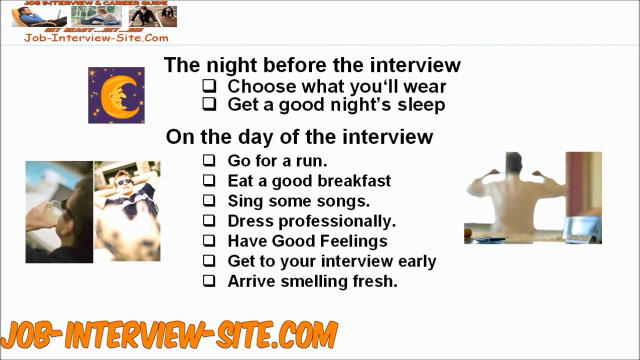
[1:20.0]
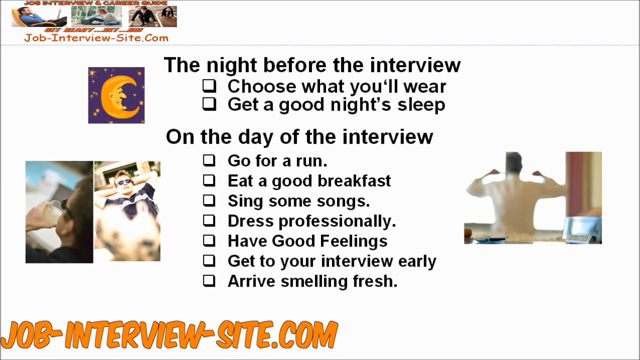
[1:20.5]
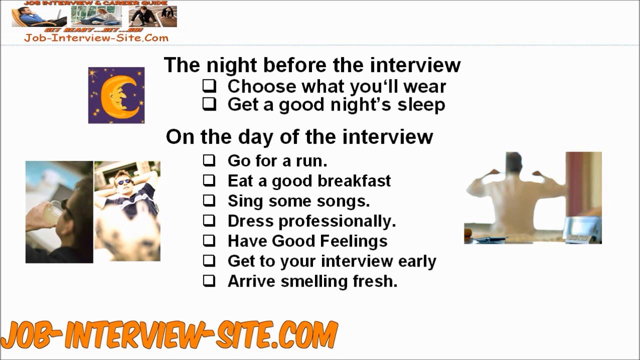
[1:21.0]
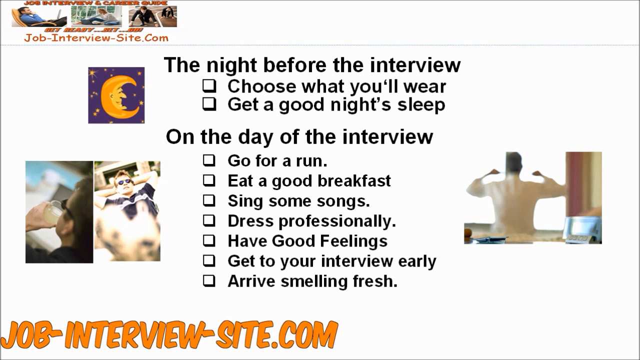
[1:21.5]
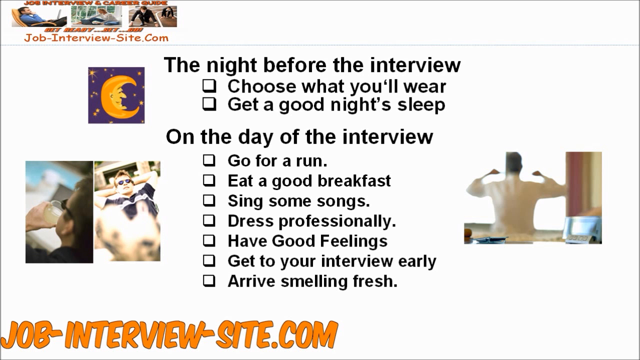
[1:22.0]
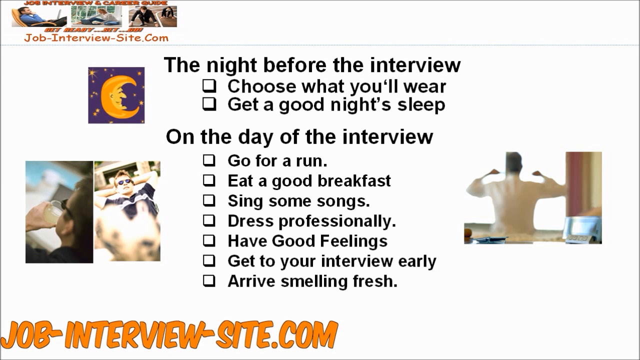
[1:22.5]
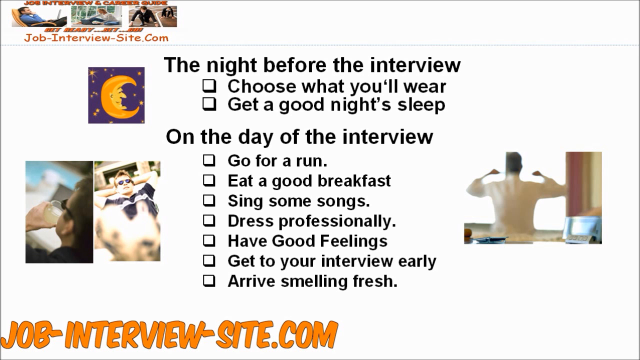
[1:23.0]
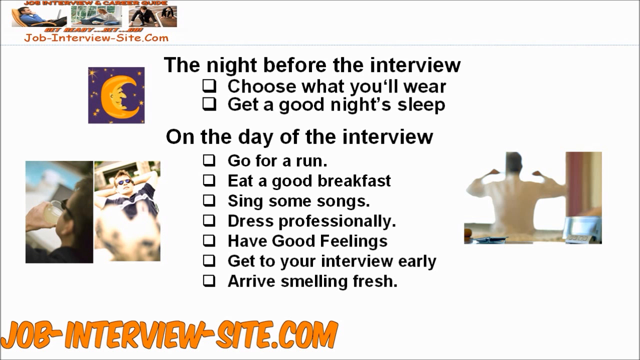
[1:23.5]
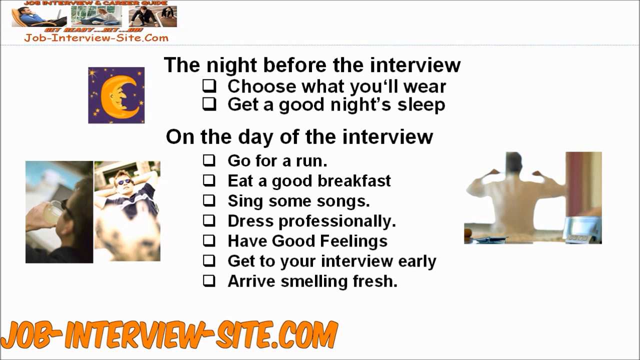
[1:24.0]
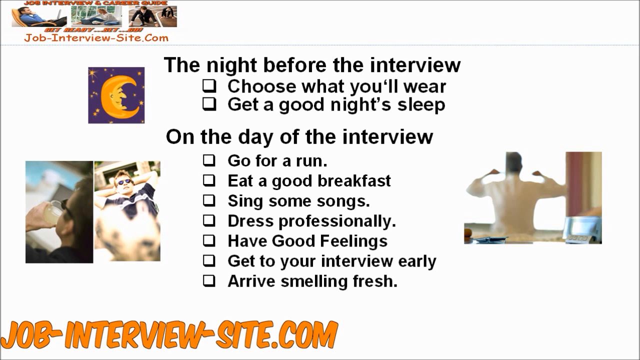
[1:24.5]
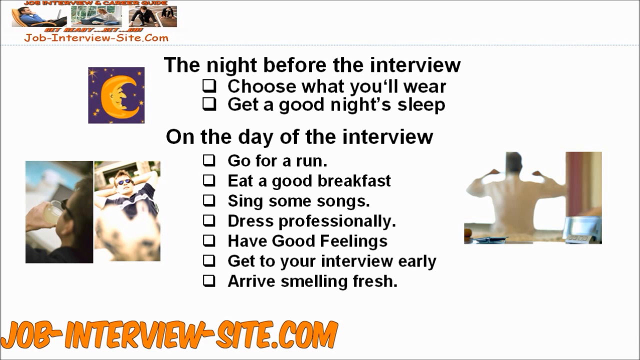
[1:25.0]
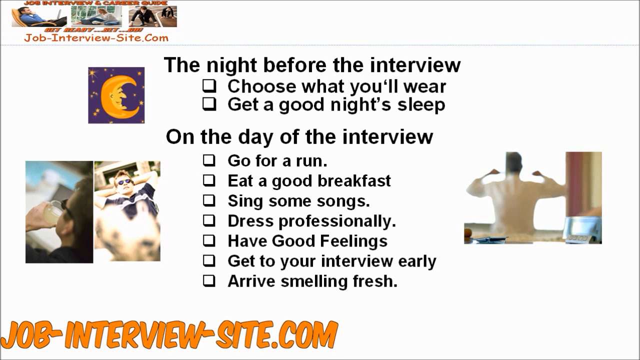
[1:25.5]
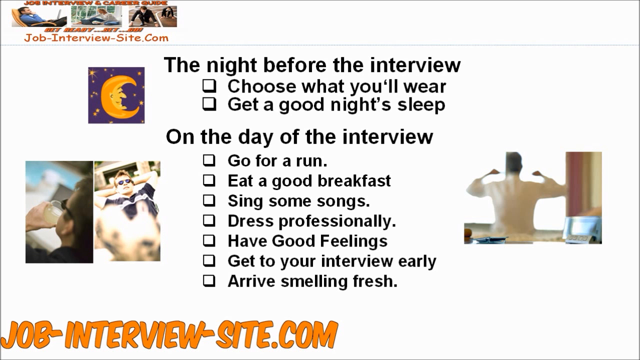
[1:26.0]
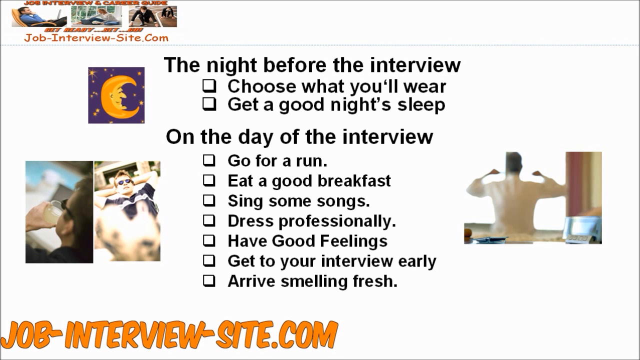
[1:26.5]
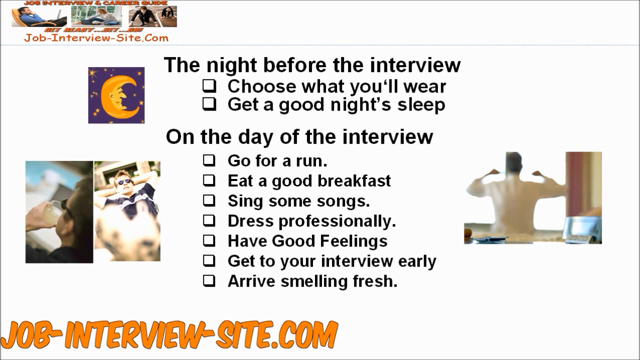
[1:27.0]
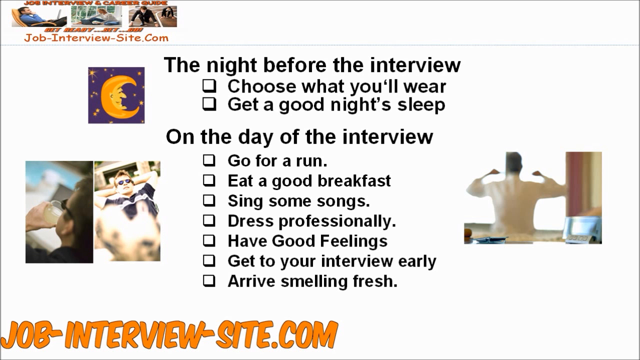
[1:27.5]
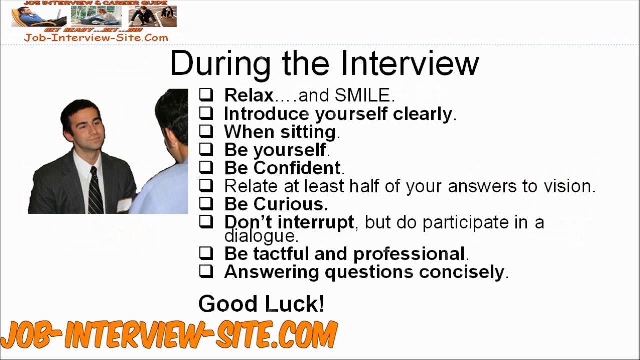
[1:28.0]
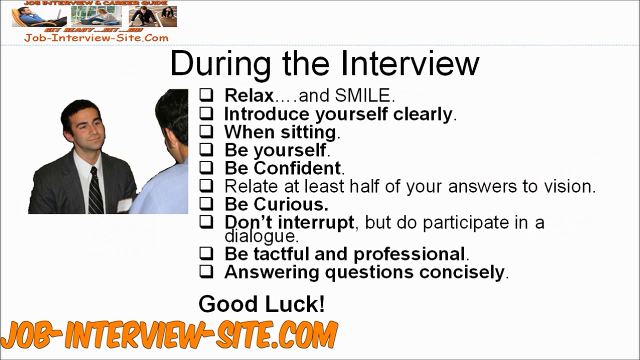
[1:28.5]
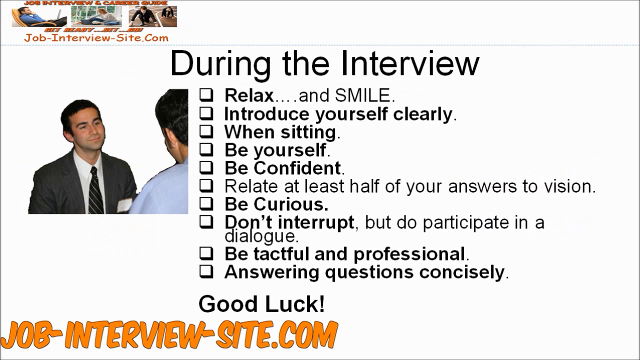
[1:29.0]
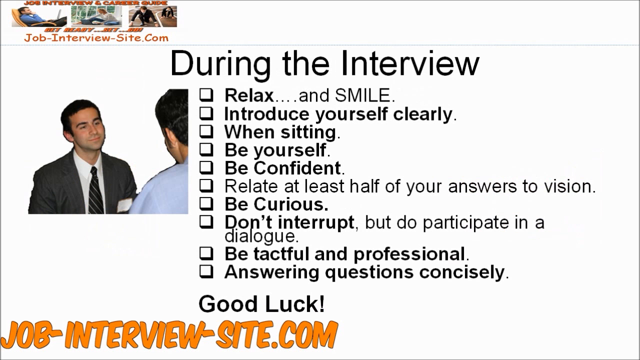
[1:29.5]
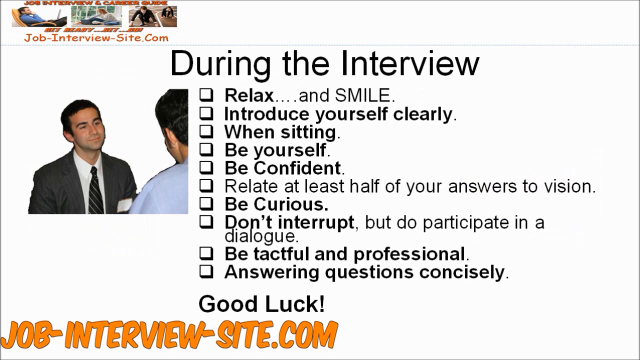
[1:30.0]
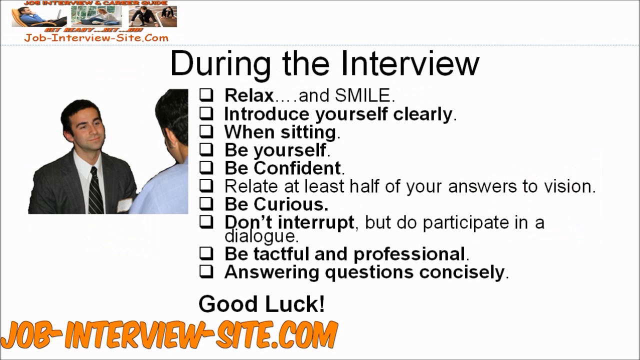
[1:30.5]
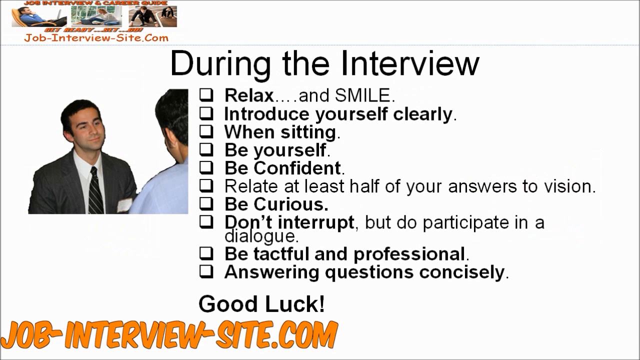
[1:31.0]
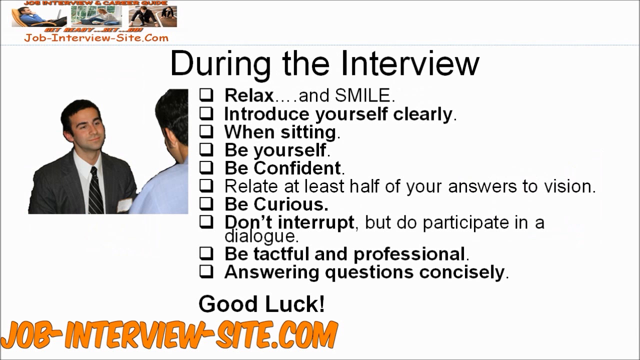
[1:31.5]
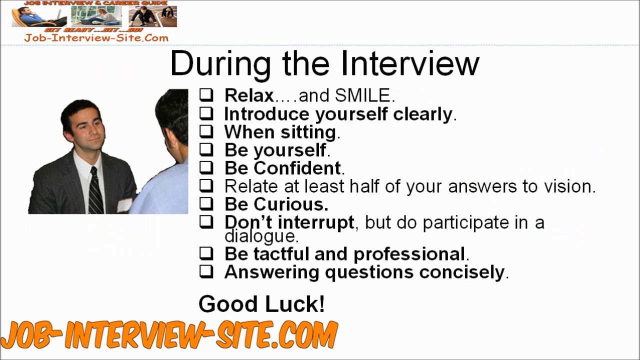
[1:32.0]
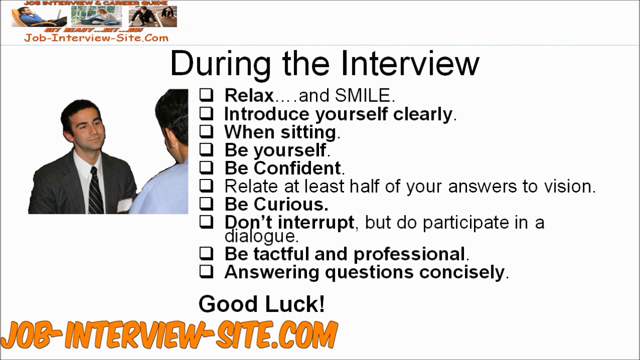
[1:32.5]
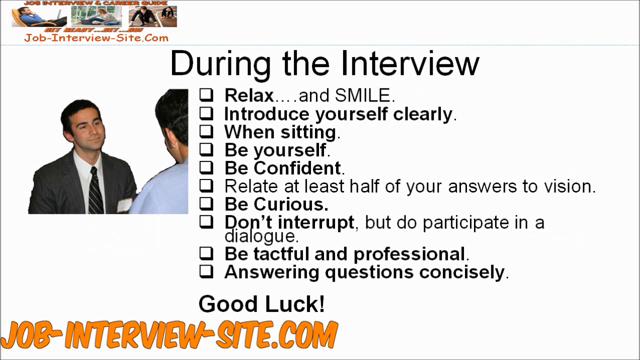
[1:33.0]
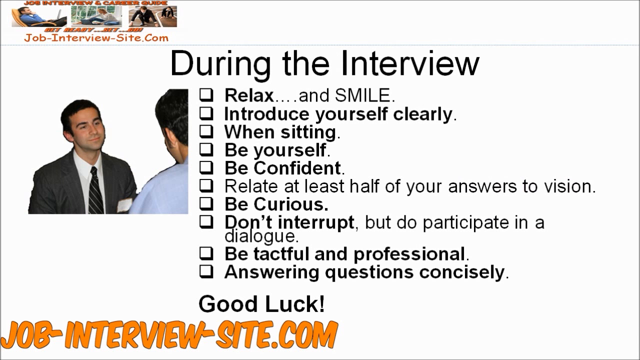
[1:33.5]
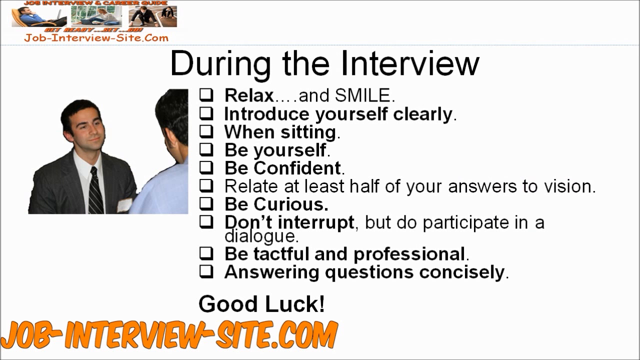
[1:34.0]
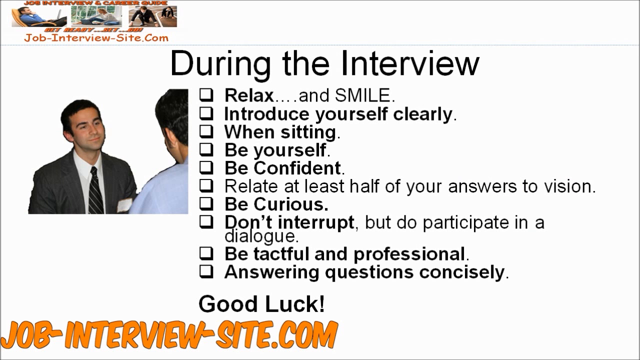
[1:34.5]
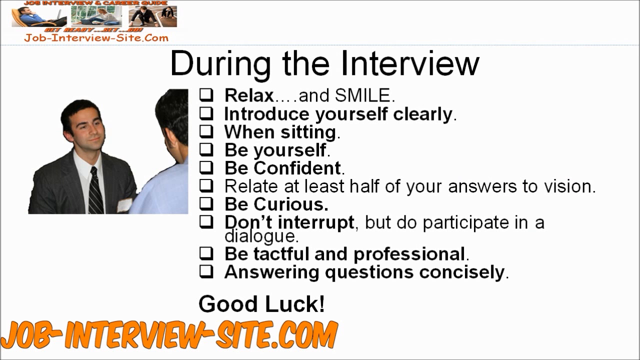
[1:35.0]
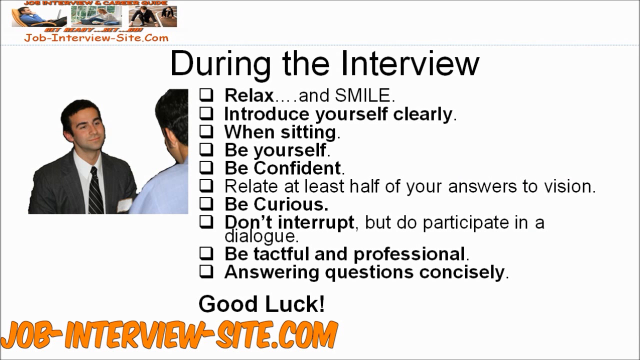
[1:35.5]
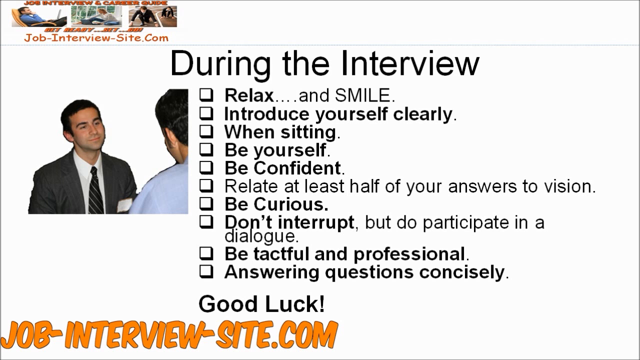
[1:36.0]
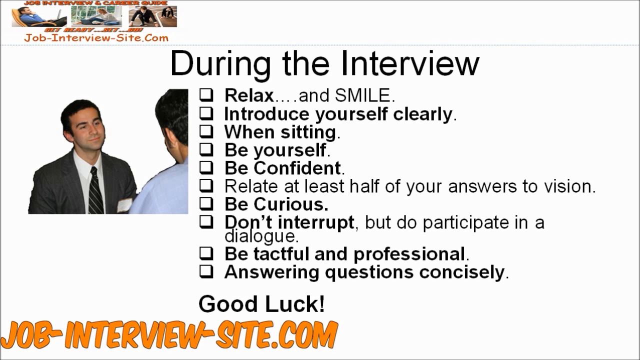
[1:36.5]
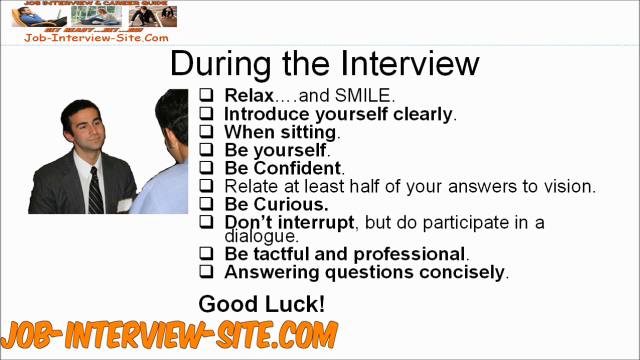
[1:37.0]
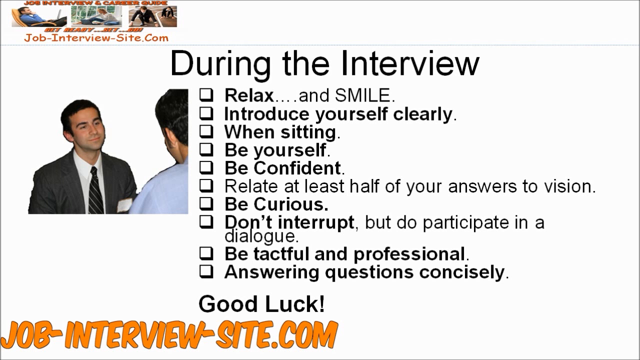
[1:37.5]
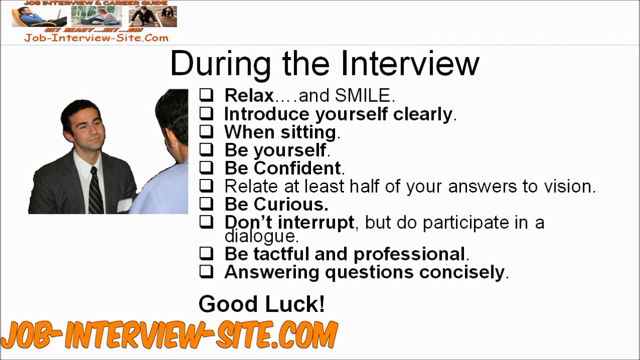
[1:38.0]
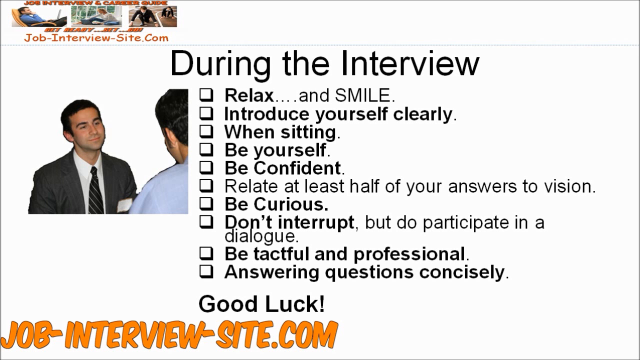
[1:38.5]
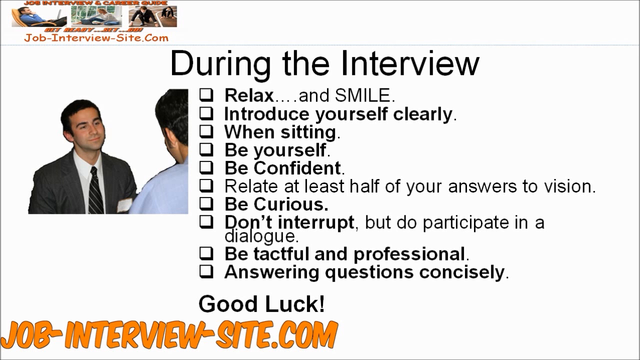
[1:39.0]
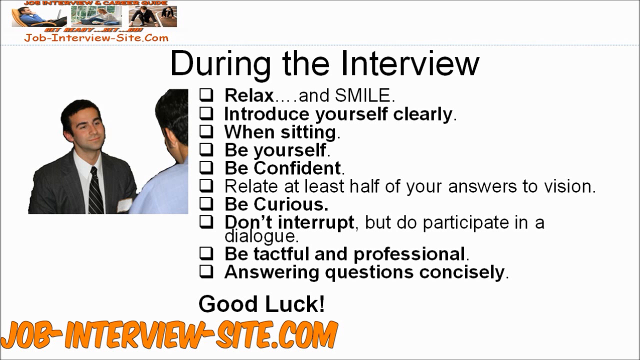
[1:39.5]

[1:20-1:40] The previous screen stays up for the first few seconds, and "jobinterviewsite.com" is written in an orange font in the top left. The page then changes. On the left of the screen, in the middle, is an image of a man with black hair wearing a suit jacket, a white undershirt and a striped tie whose stripes run at about a 45-degree angle. The section is titled "during the interview" and contains around 10 bullet points: "relax and smile," "introduce yourself clearly when sitting," "be yourself, be confident," "relate at least half of your," "be curious, don't interrupt, but do participate in dialogue," "be tactful and professional," and "answer all questions concisely," followed by "good luck!" Some of the bullet points end with a full stop and some do not, and there is an ellipsis of four dots after the word "relax."